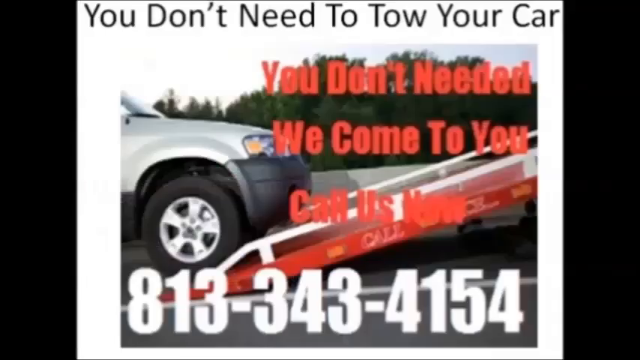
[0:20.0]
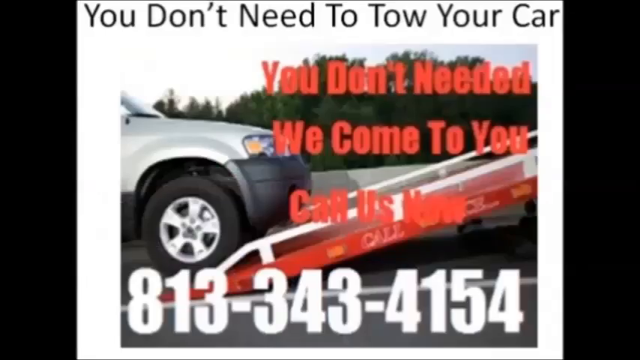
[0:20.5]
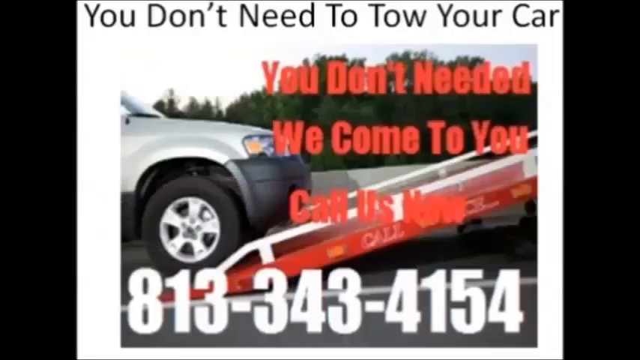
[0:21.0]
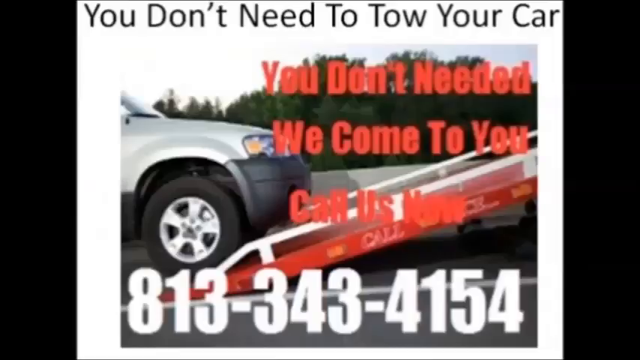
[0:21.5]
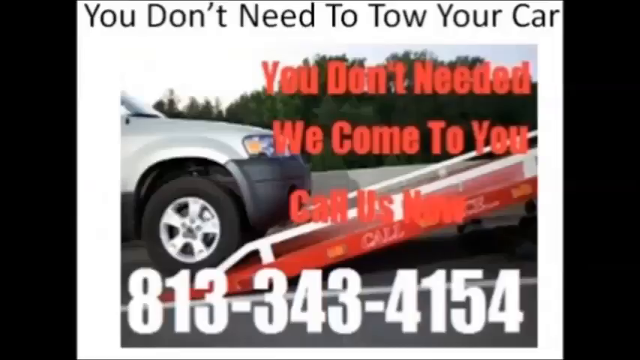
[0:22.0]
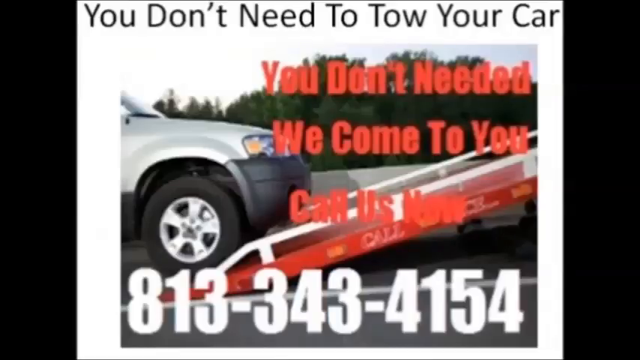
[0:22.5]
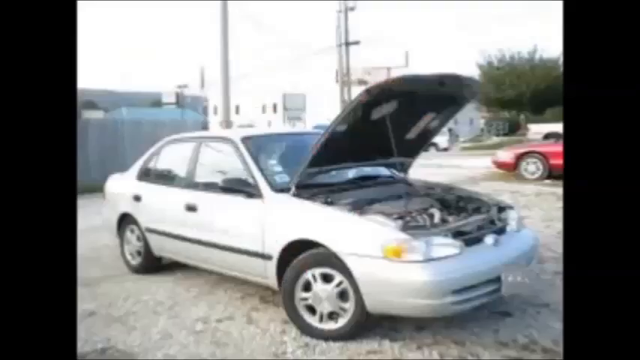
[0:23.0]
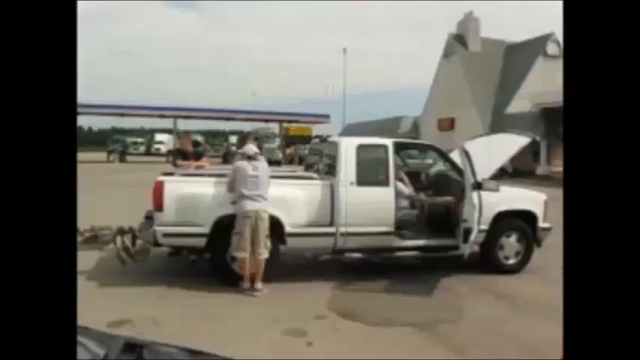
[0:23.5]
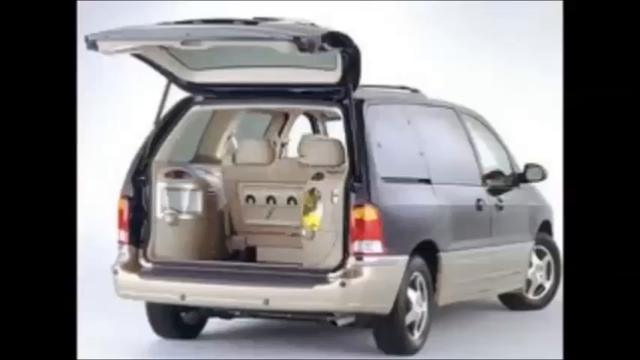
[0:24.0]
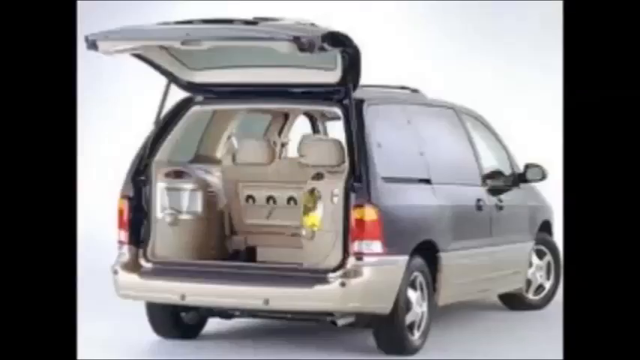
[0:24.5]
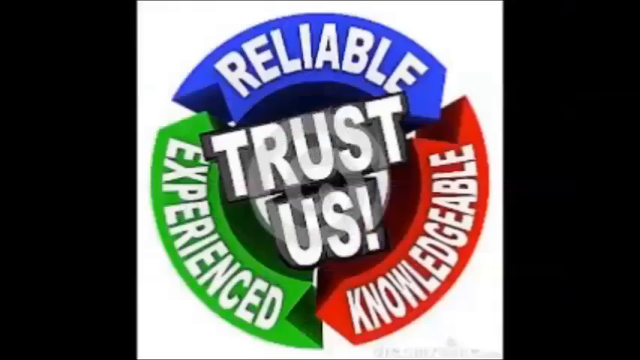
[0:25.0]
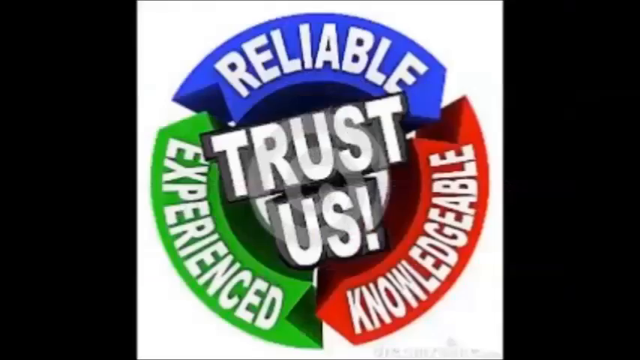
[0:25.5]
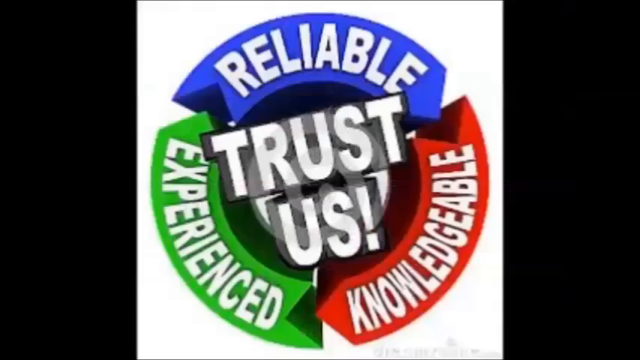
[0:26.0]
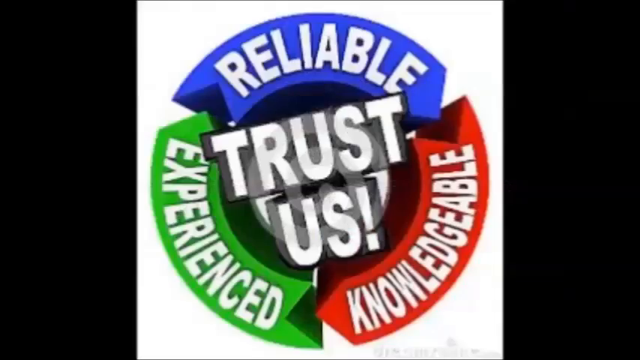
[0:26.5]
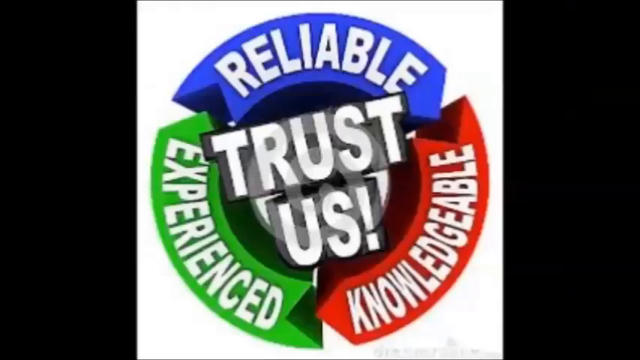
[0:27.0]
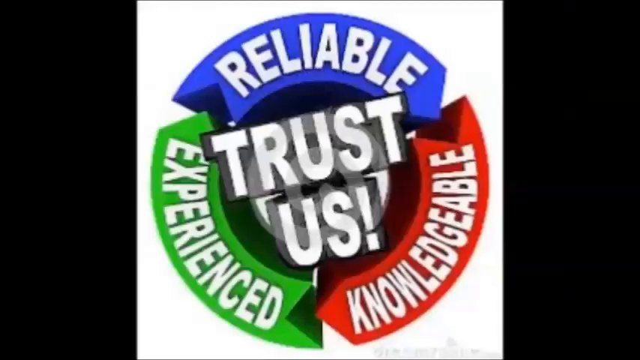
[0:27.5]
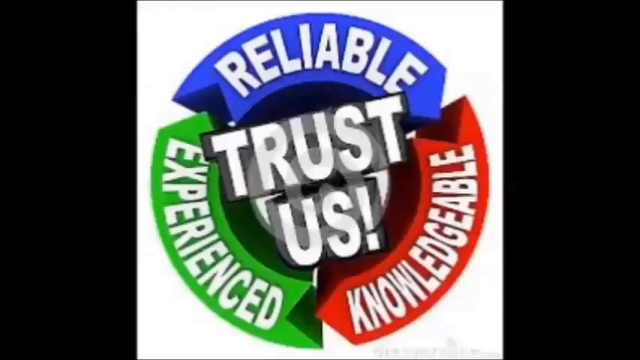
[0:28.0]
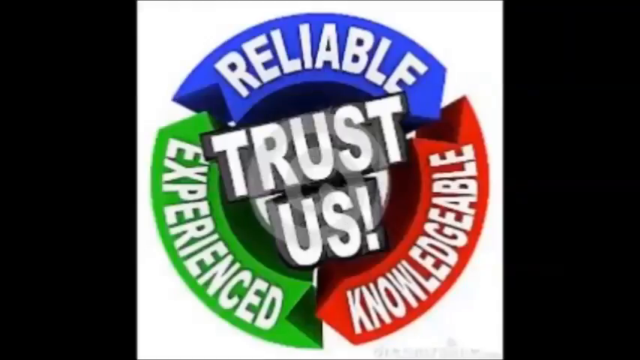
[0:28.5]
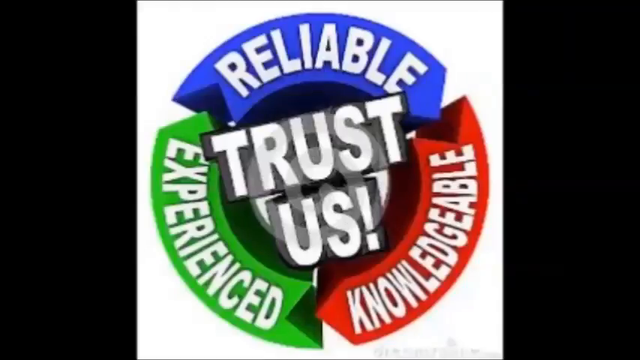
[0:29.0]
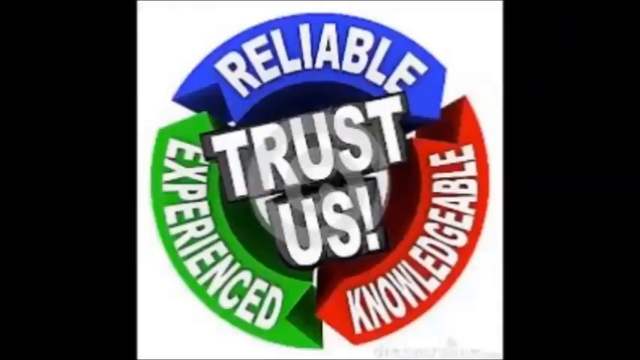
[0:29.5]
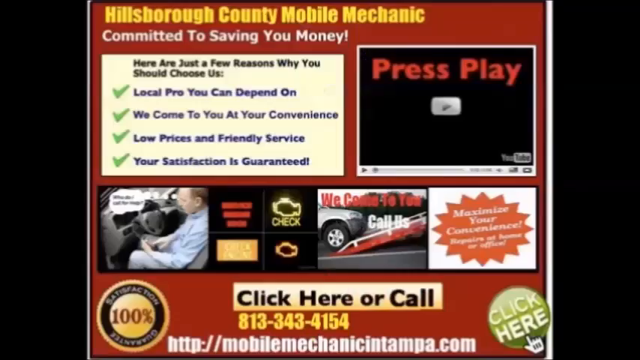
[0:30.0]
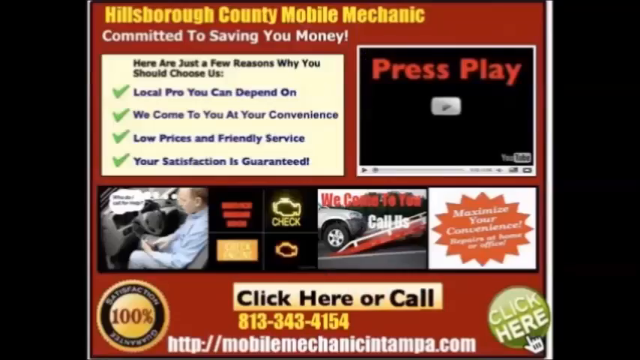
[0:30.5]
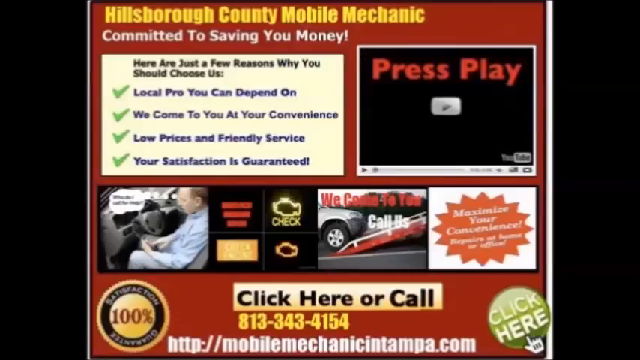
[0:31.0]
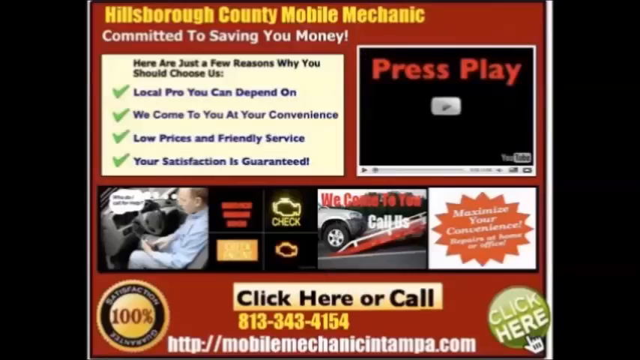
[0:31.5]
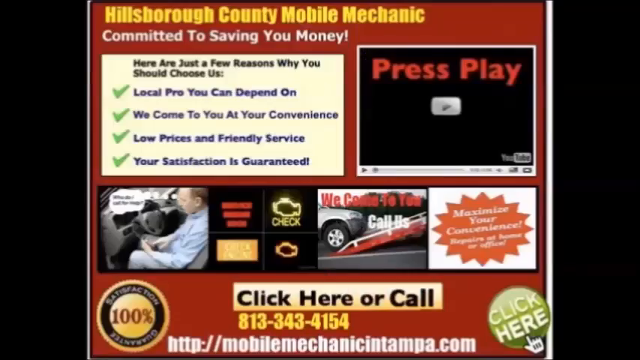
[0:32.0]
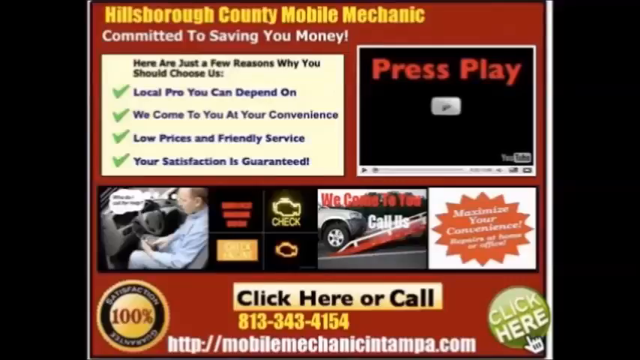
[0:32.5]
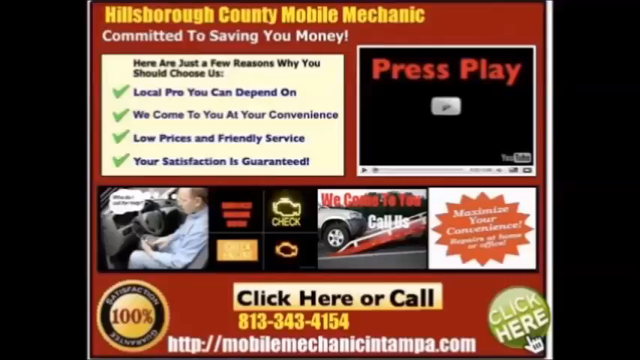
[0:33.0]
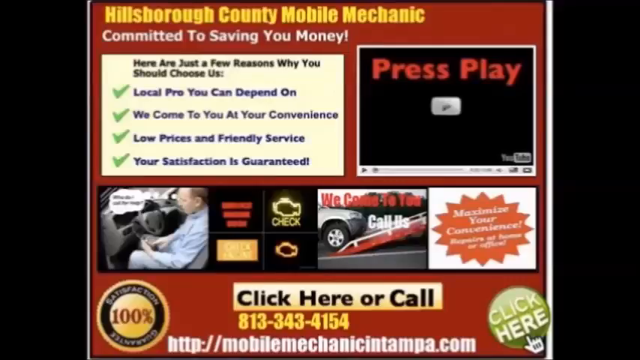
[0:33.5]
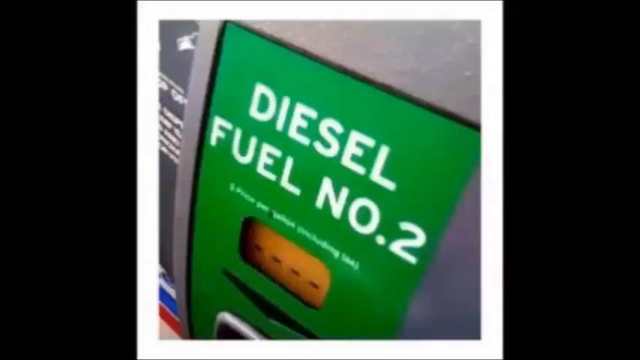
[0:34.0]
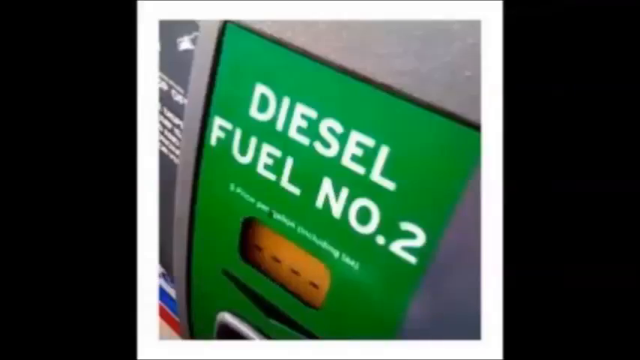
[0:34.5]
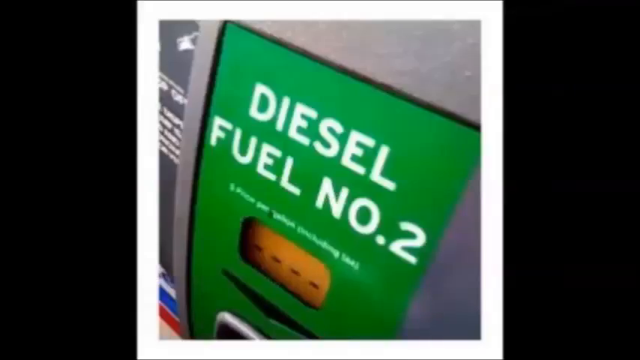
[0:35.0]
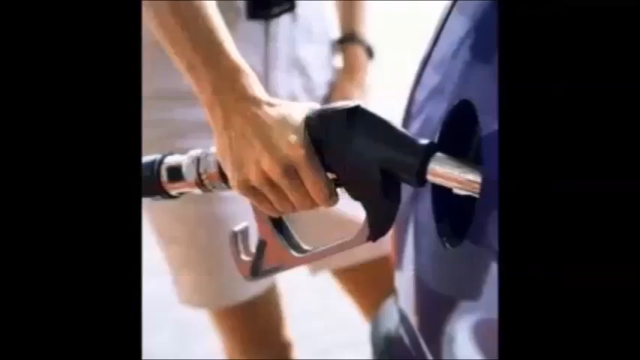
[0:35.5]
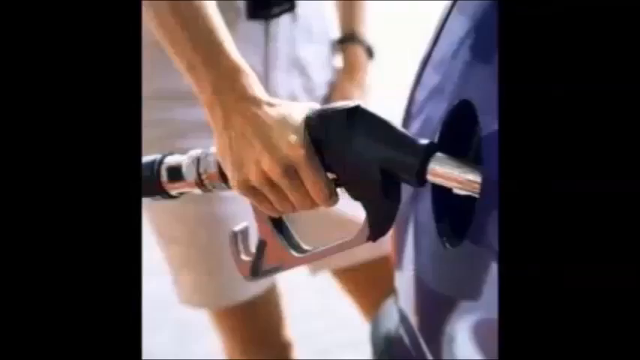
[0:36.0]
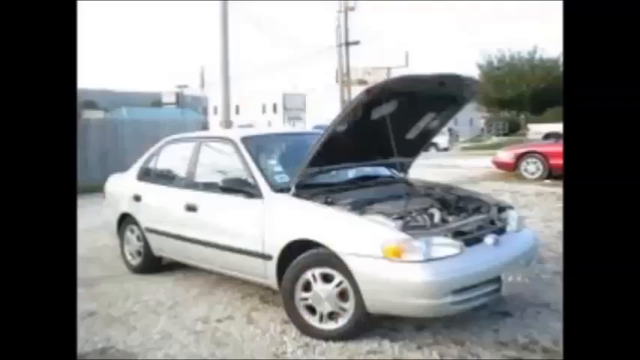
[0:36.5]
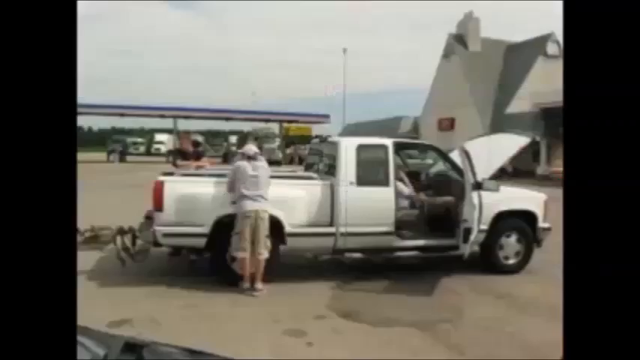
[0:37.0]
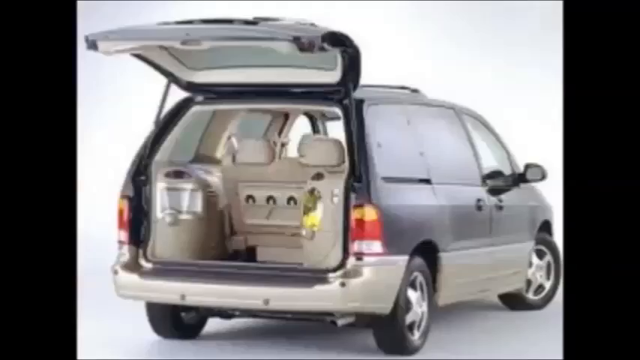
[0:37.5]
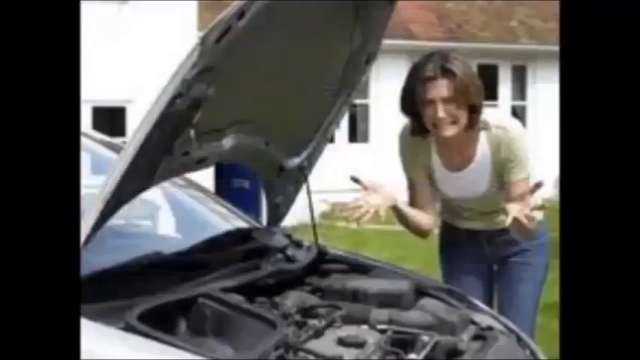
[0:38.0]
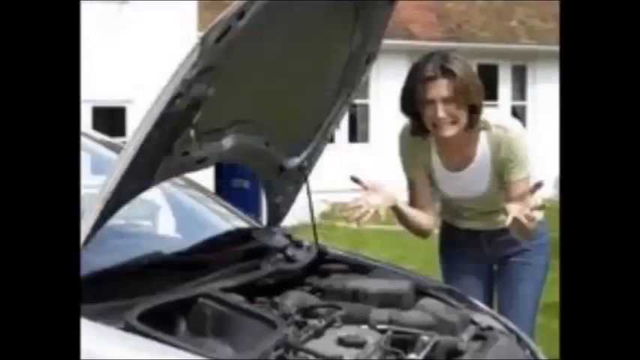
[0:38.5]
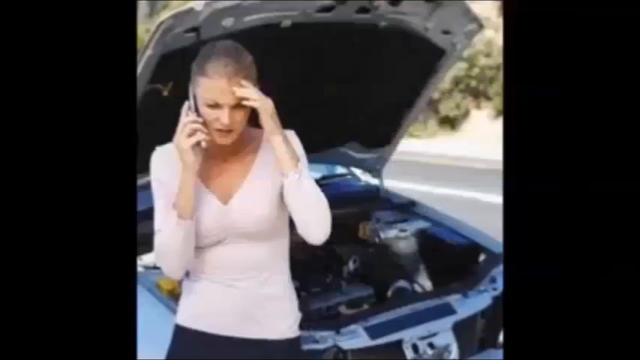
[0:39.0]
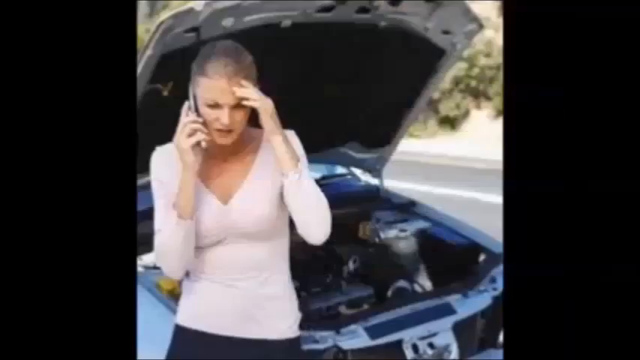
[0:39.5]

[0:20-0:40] An ad on the screen reads "you don't need to tow your car" and "we come to you, call us now." The phone number, 813-343-4154, is in white font at the very bottom of the screen. As the video plays, it shows people's cars, with the words "reliable, trust us, experience knowledgeable." The text "Hillsborough County mobile mechanic" appears, as does "diesel fuel." A person stuck outside is shown calling on the phone. The images move very fast. A woman with a baby on her hip is calling their number; she is on a roadside, holding a young child on her hip, with what looks like a baby in a car seat right by her leg, and she has her phone up by her face as she makes the call.